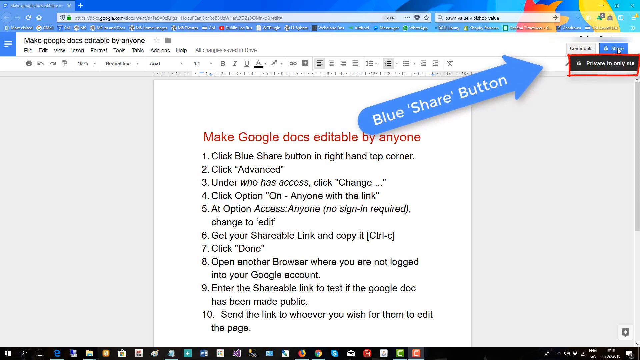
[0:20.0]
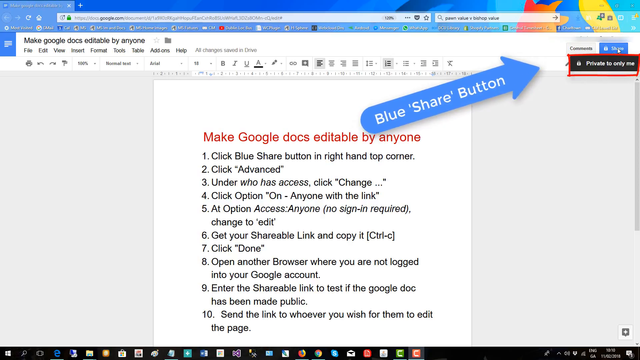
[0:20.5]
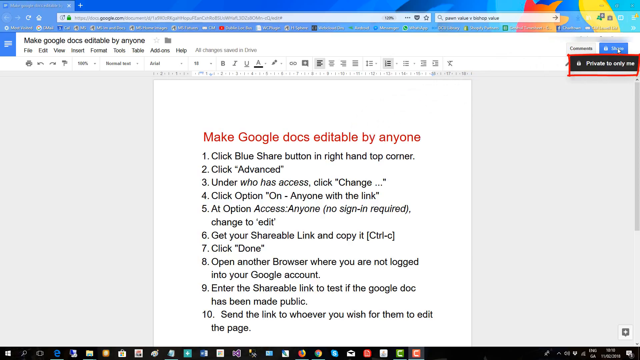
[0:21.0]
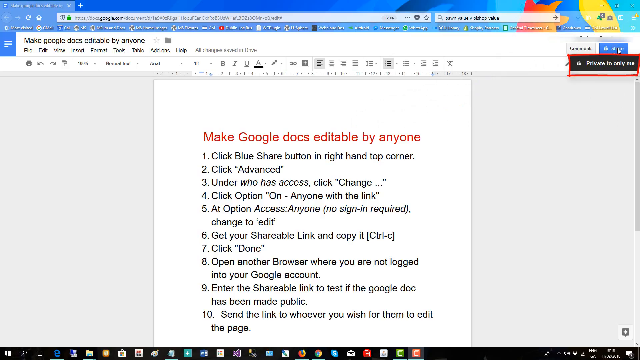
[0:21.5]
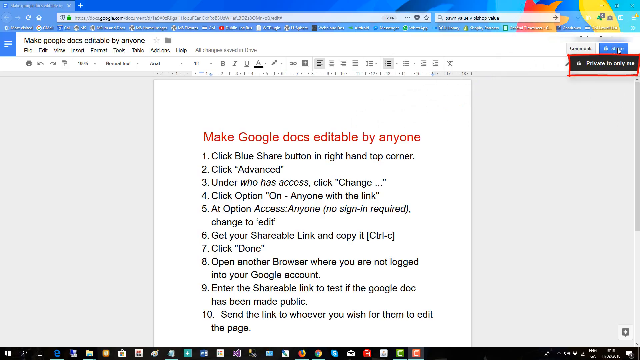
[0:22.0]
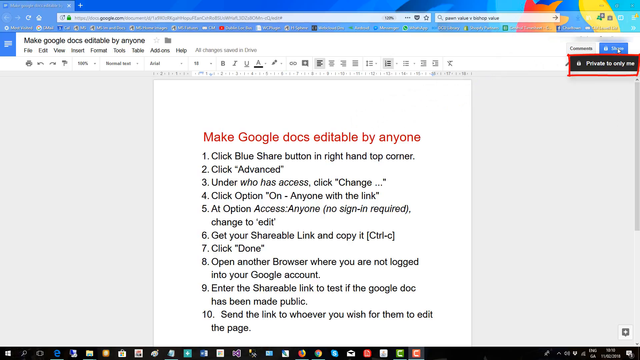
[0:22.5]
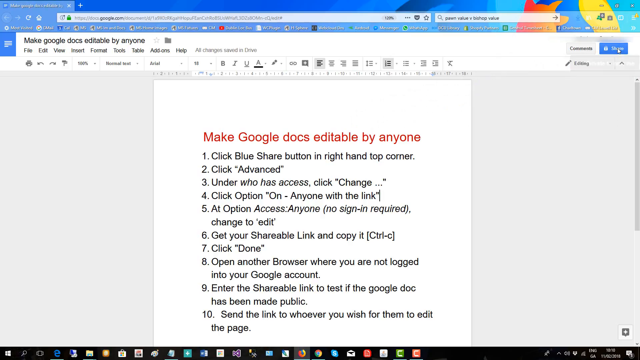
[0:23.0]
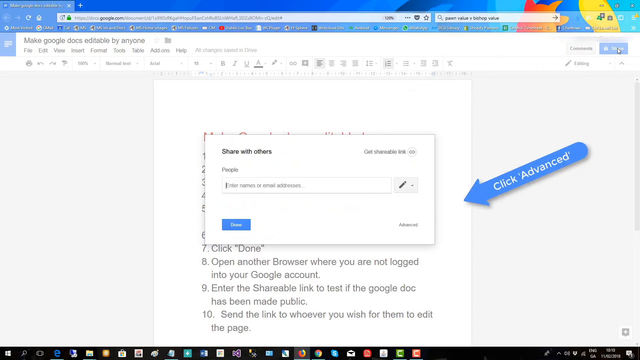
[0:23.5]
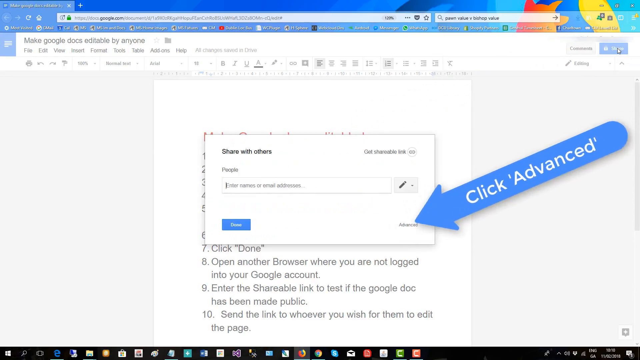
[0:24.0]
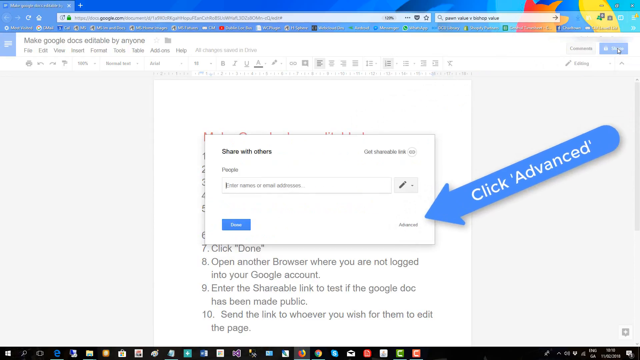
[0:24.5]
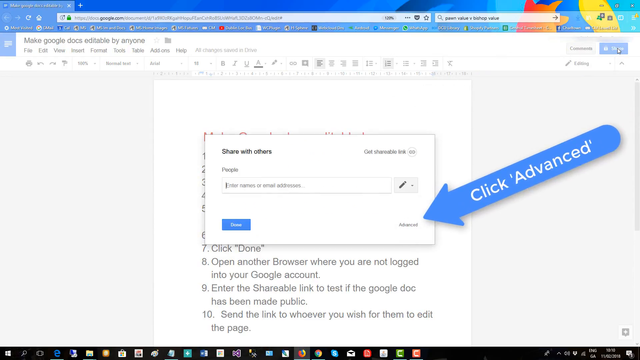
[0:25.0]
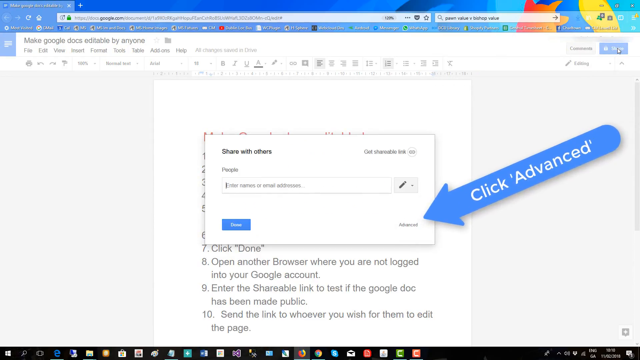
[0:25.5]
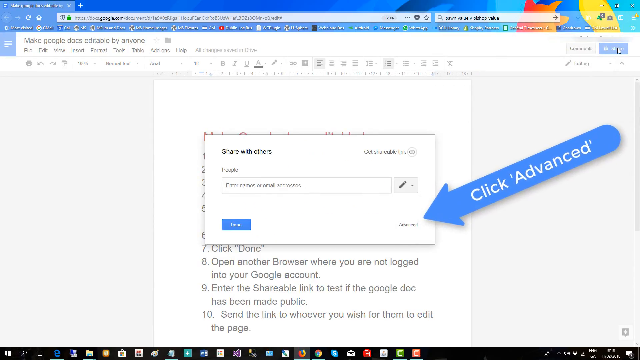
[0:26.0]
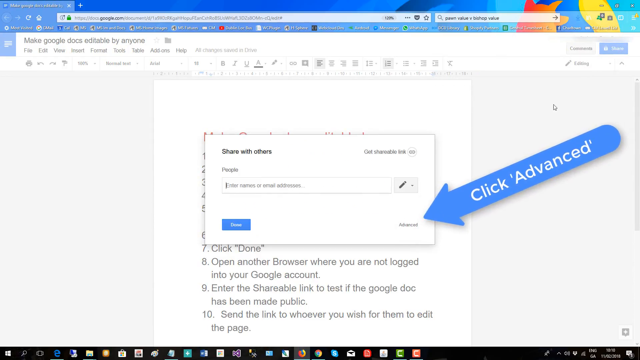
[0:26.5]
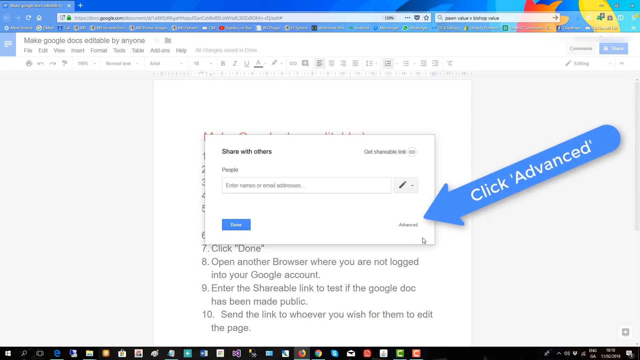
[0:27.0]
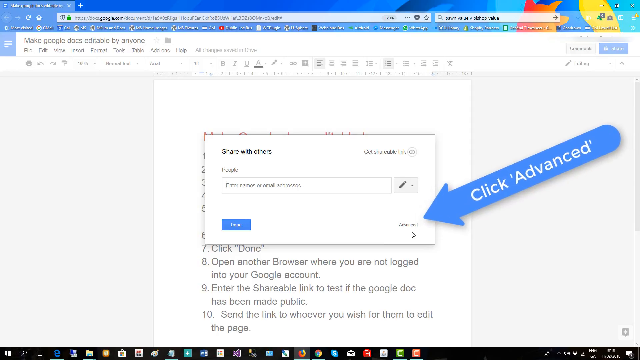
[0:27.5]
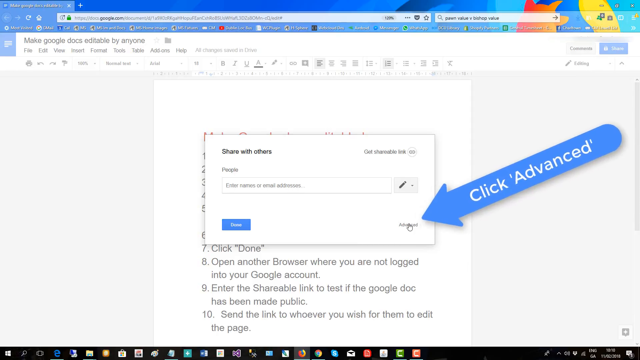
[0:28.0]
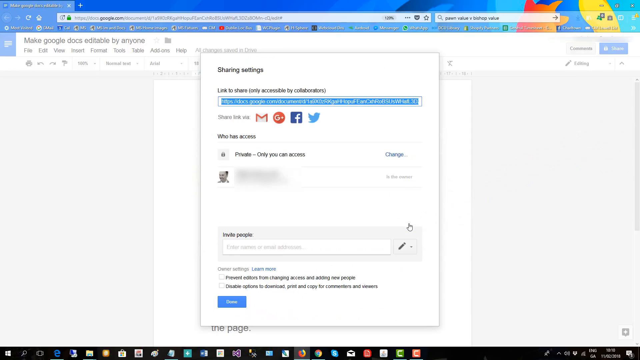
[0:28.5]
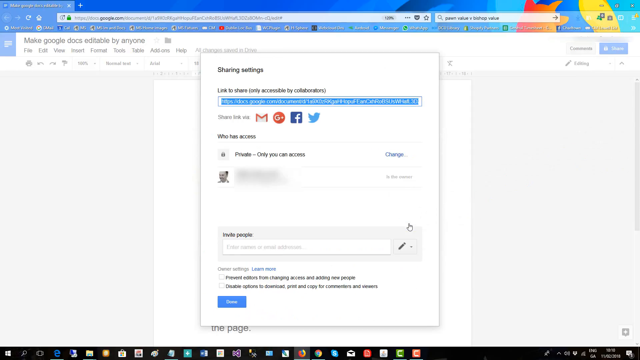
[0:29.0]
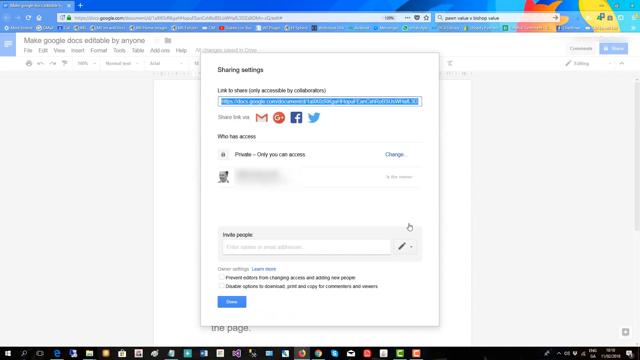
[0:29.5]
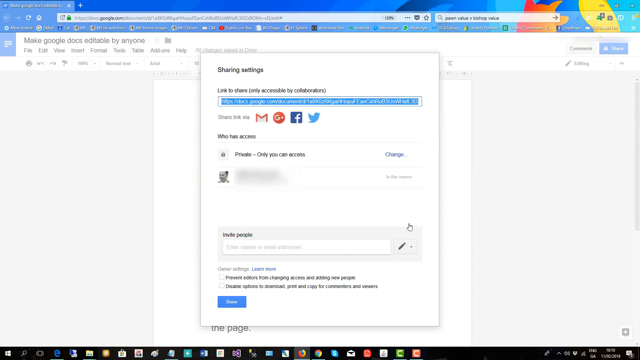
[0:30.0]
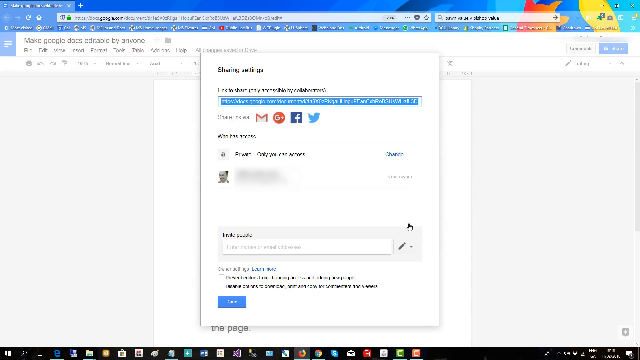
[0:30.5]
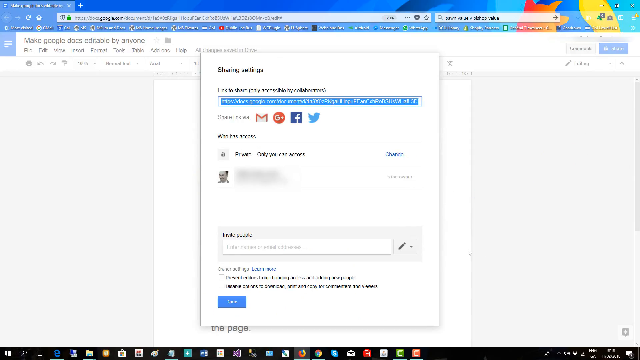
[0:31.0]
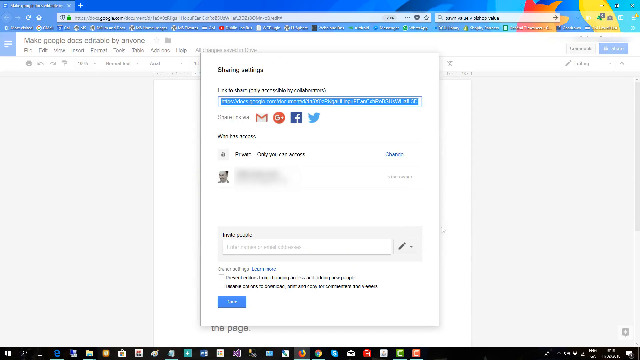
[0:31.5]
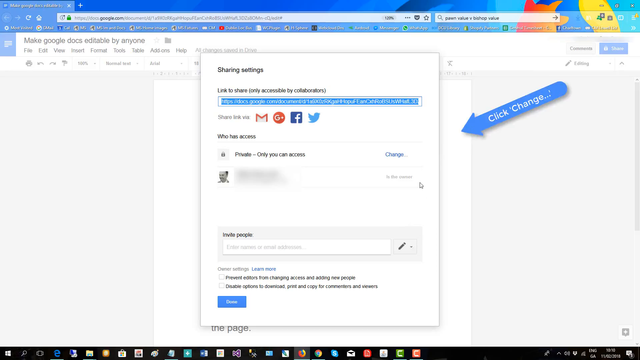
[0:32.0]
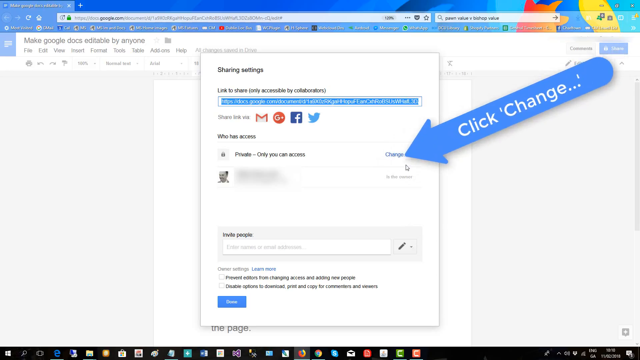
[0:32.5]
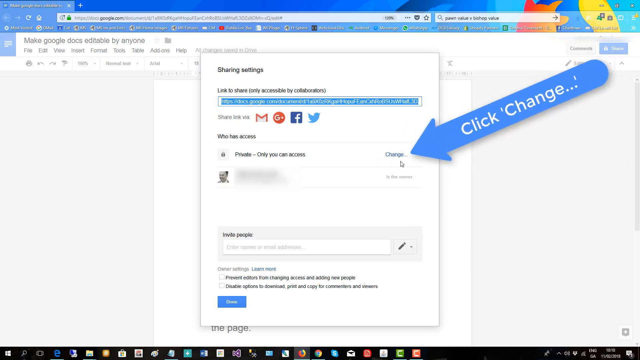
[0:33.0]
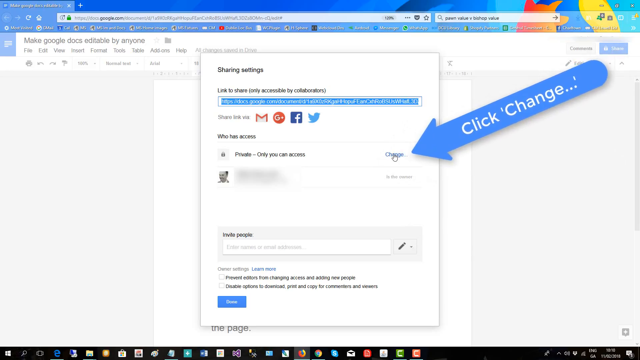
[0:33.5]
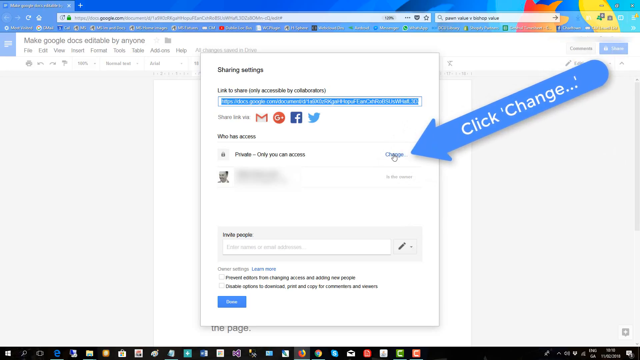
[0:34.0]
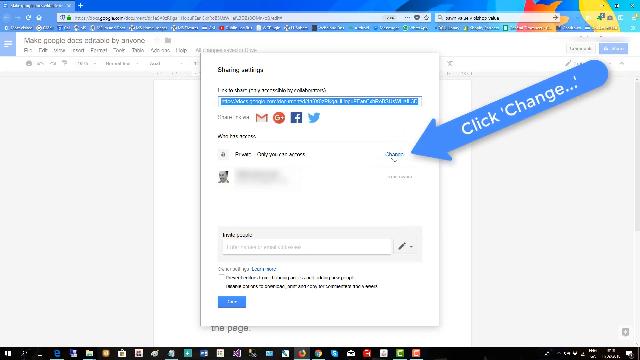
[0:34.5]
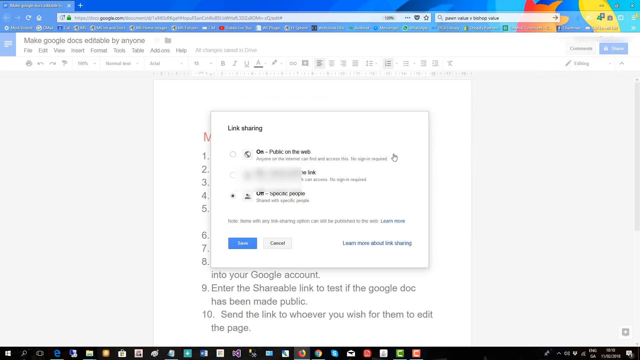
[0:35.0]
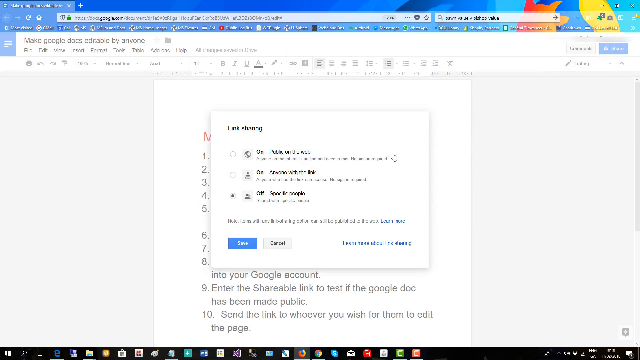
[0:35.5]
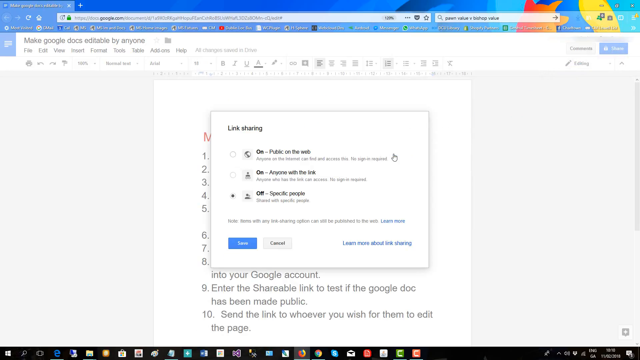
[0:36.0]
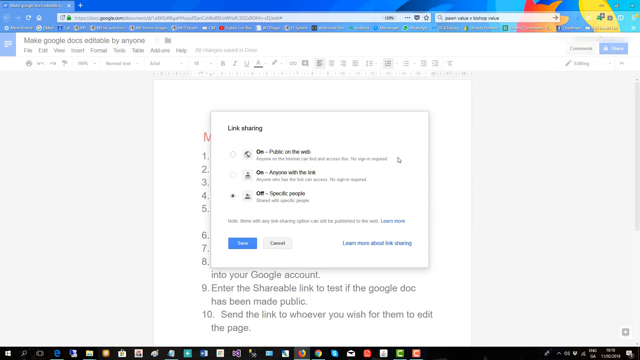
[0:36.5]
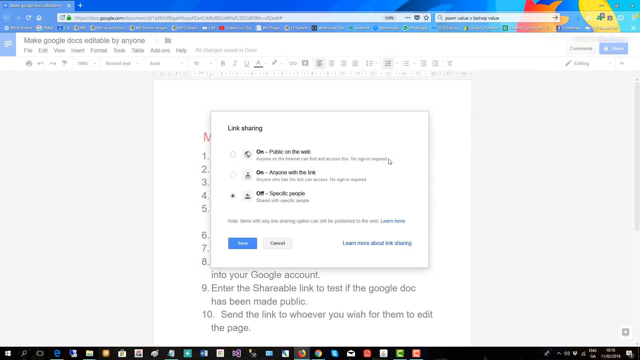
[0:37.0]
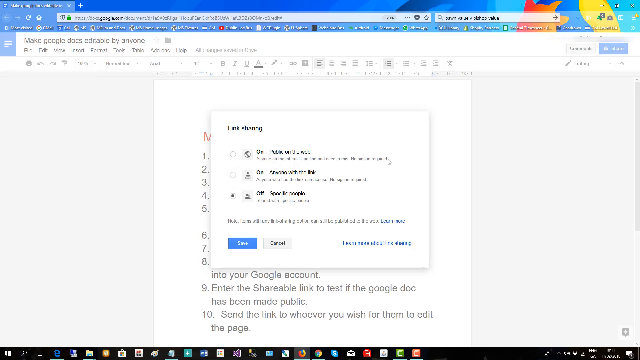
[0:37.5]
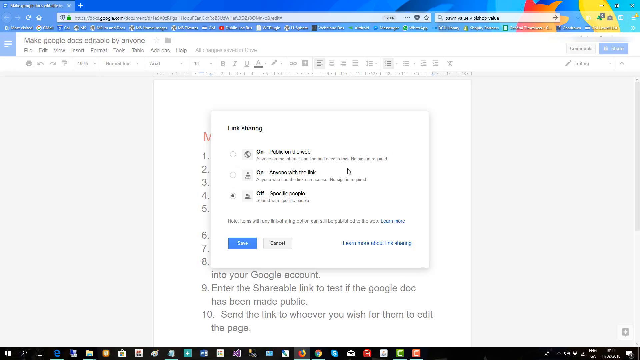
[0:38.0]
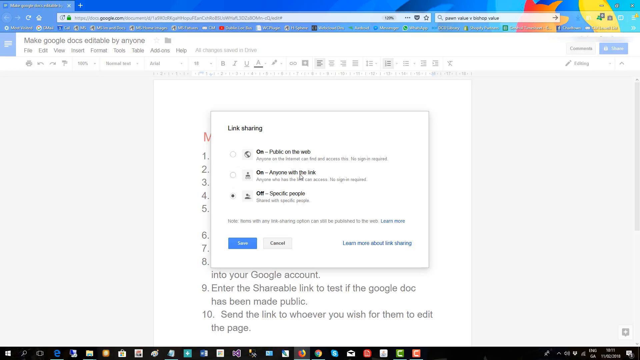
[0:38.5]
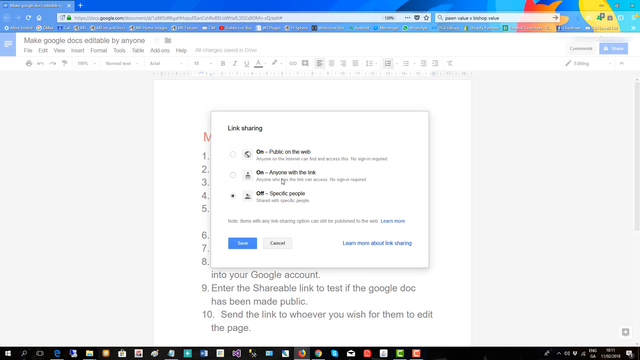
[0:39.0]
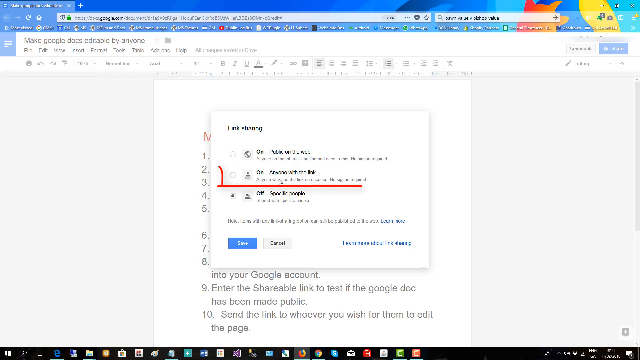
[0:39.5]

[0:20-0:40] The instructions for making Google Docs editable by anyone are the main thing on the screen, along with a big blue arrow in the top right corner labeled "the blue share button" that points to the blue share button in the top right corner. After it flashes a few times, another arrow pops up with the words "click advanced," pointing to the little advanced button in the bottom right corner of the share with others tab. The mouse moves down to the share with others button and clicks it, opening a menu with a link at the top that can be used for sharing. Halfway down, there is a link, and an arrow pops up for changing access so anyone can share.